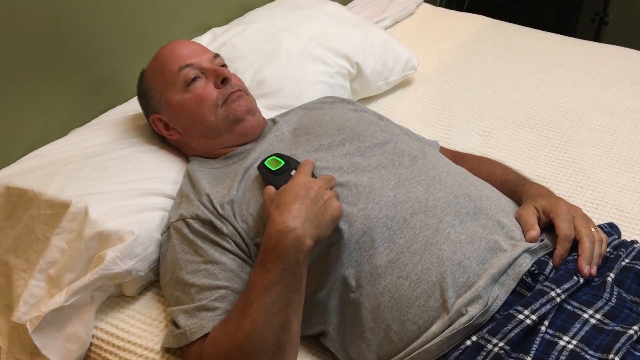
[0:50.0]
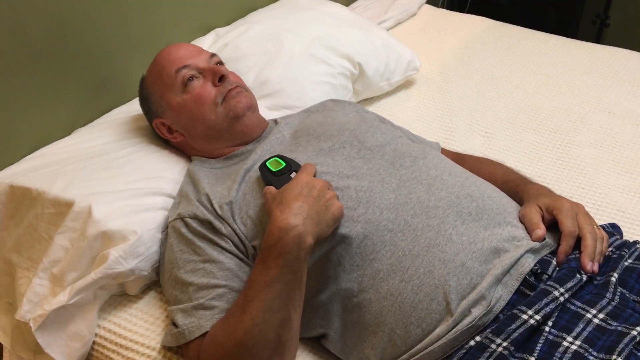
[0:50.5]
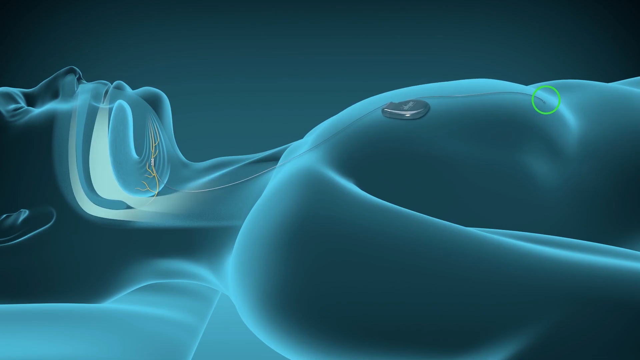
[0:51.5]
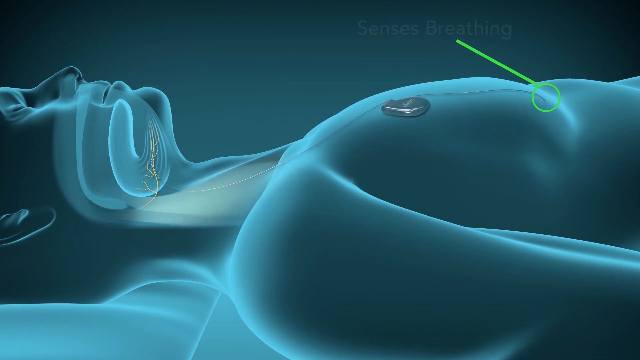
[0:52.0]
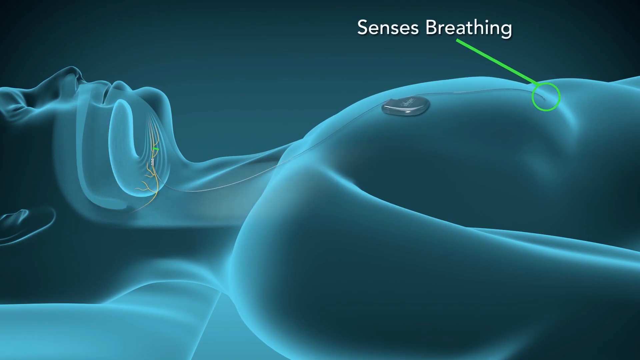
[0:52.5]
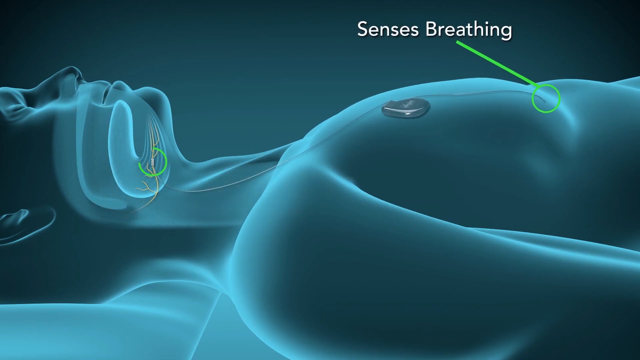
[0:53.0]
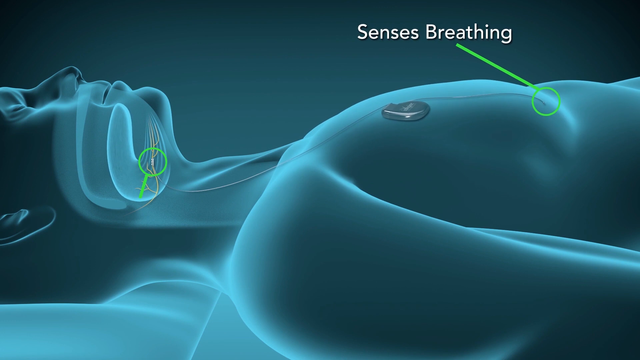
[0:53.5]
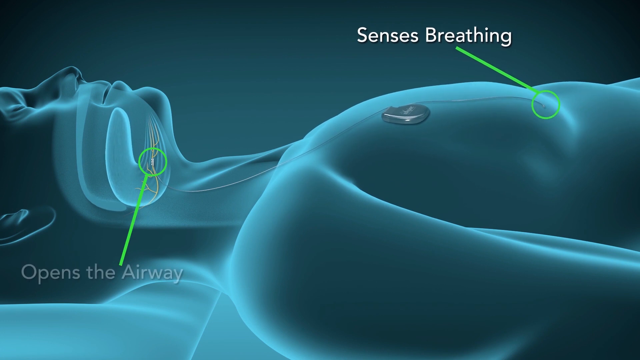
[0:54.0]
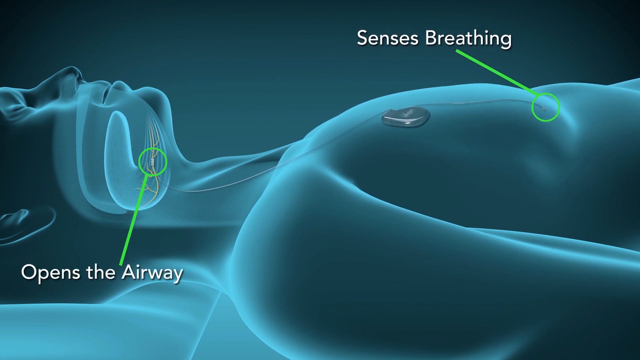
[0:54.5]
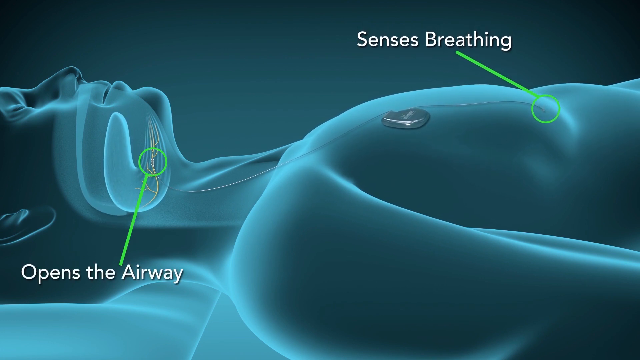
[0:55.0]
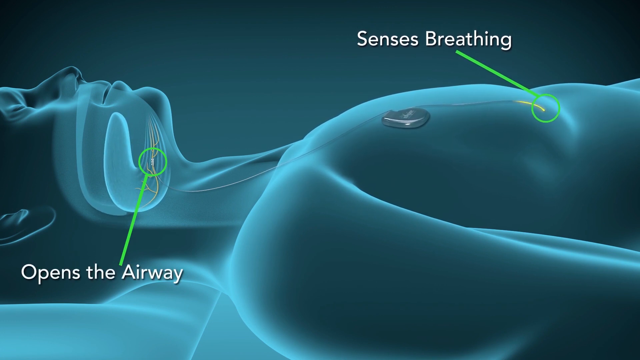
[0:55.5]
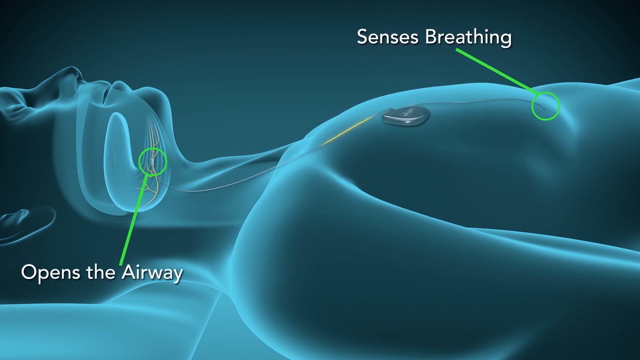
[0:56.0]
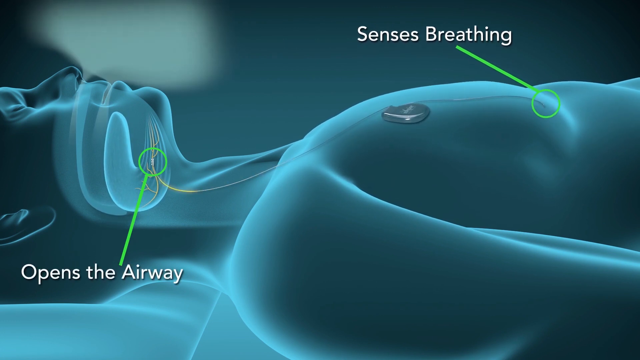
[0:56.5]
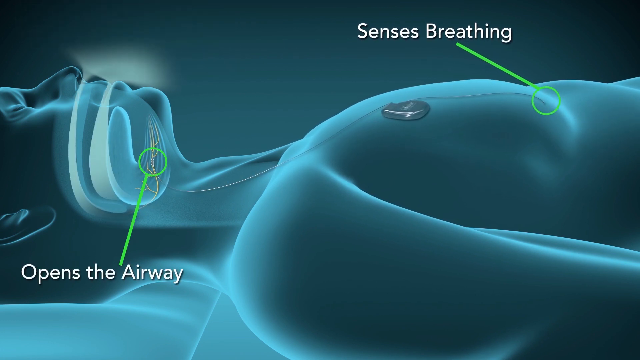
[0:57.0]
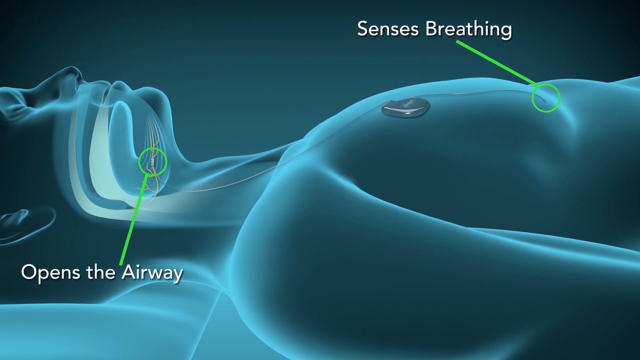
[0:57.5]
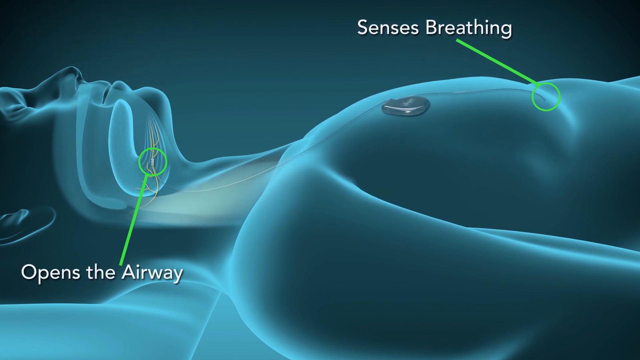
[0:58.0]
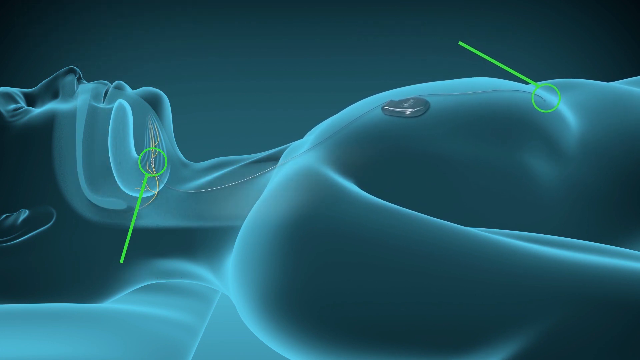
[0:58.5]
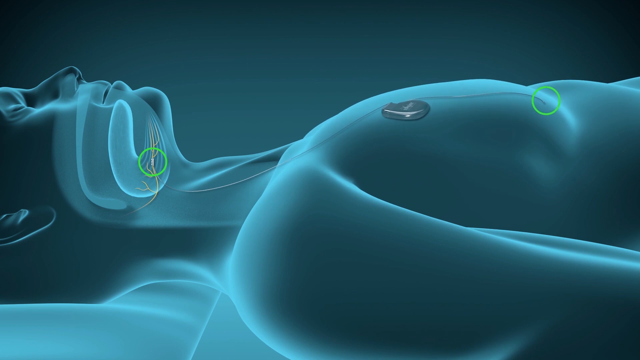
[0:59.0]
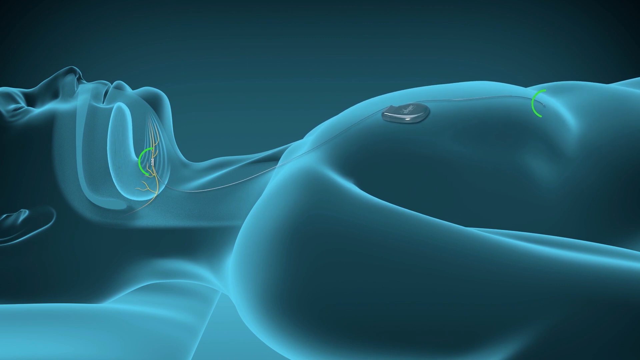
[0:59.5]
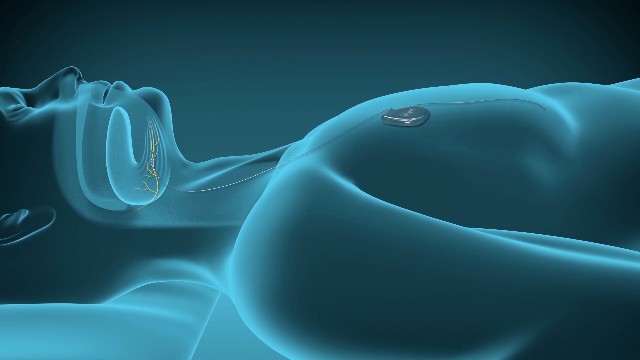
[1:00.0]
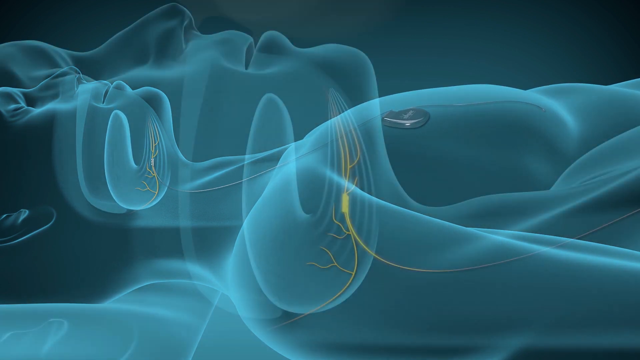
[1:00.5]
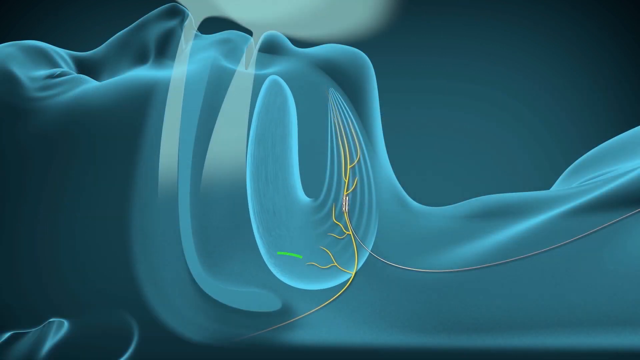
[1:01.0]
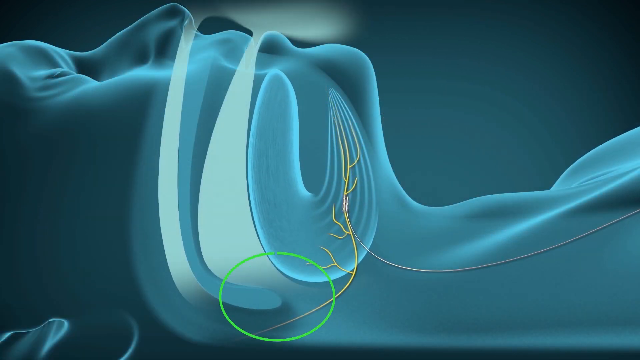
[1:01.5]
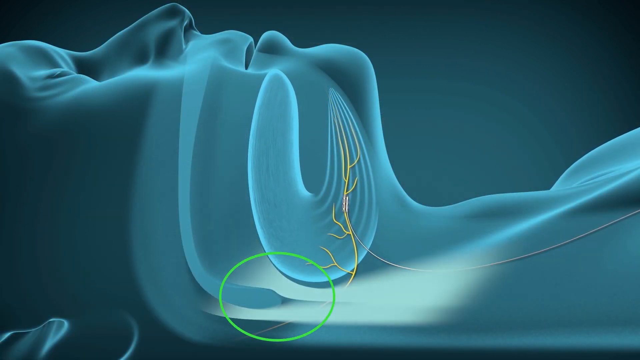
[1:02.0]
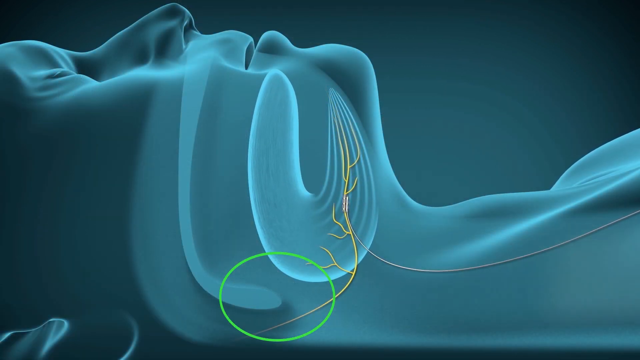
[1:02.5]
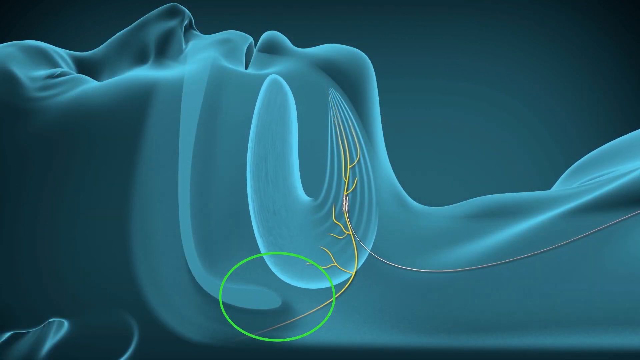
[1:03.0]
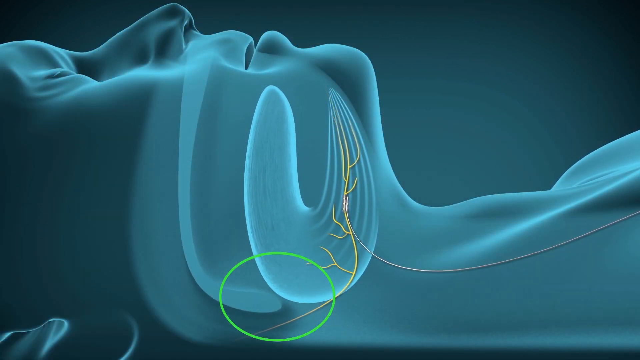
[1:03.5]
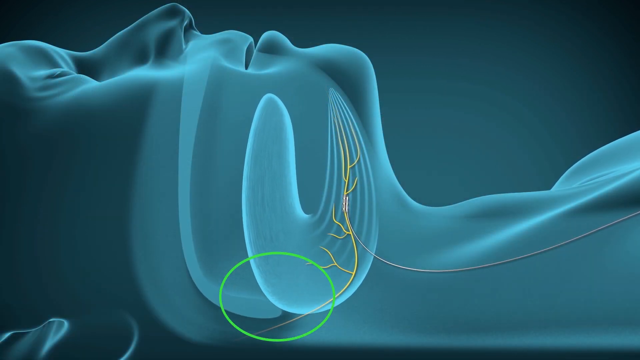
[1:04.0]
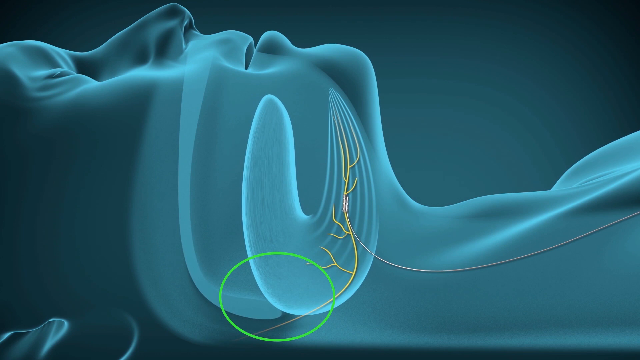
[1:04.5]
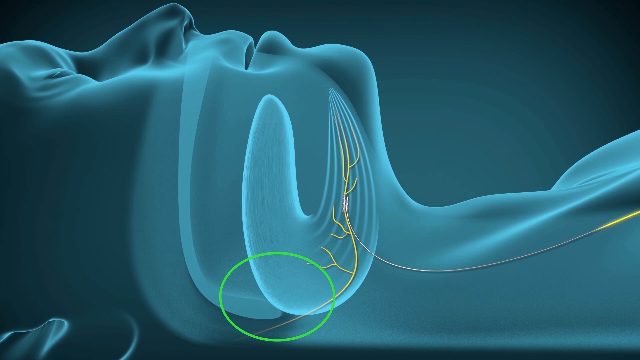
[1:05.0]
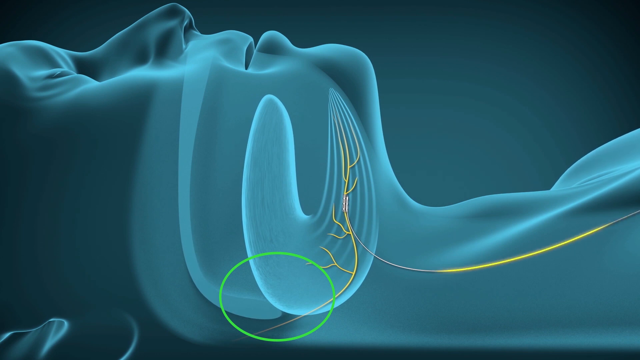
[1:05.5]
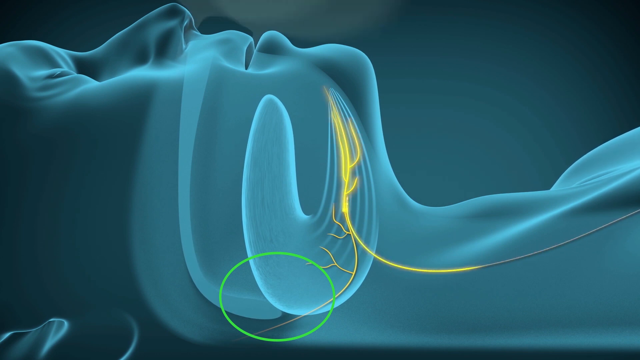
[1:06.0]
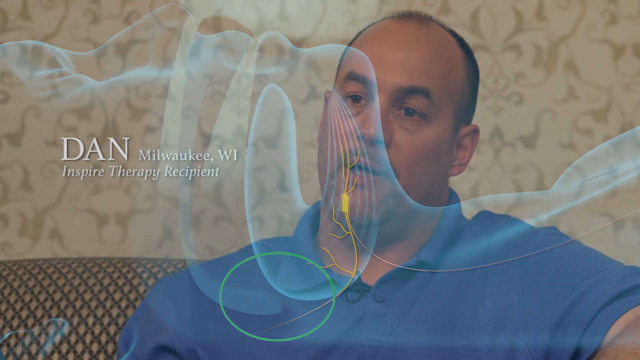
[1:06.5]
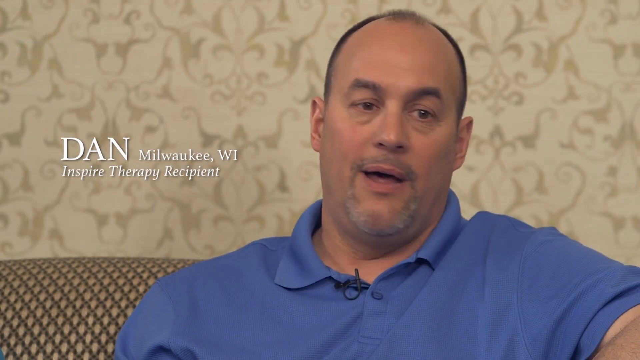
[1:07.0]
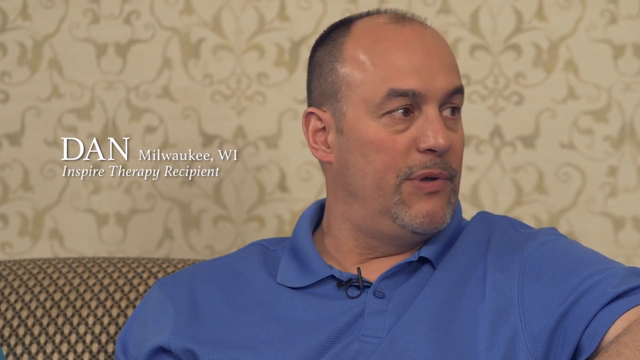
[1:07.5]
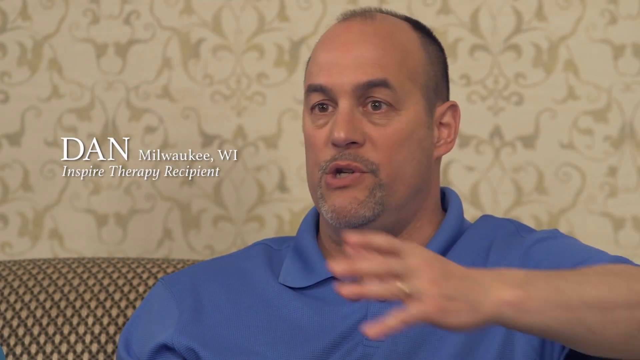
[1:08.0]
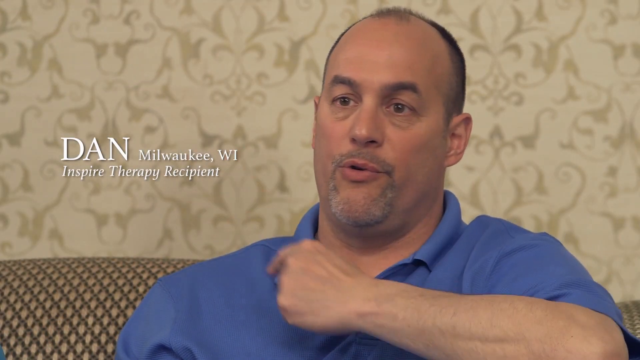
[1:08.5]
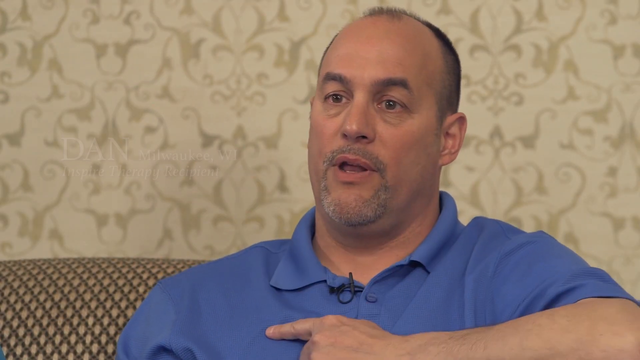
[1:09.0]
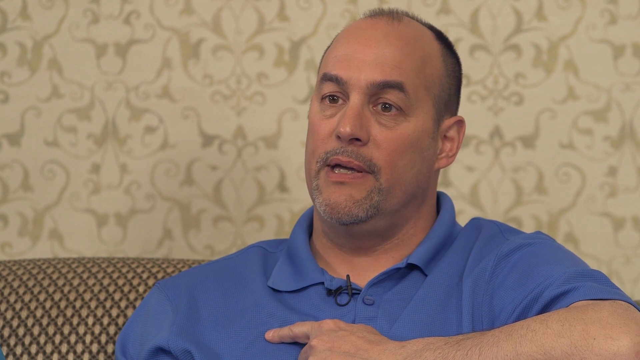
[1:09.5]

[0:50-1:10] The rendering of the human appears, showing the right side of the body close to the chest and near the neck. Parts of the body below the chest are highlighted and labeled "senses breathing," and the airway is highlighted with the label "opens the airway." Devices inside the body send signals to each other, and the airflow is represented to show how the devices work to help with breathing. A close-up of the neck indicates another part where the device helps the breathing of the airway. The next shot shows a man identified as Dan from Milwaukee, an Inspire therapy recipient. He talks animatedly with his hands, wears a blue polo, and has some hair on the top of his head.